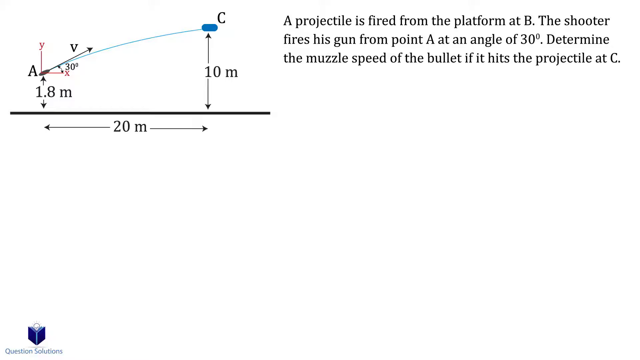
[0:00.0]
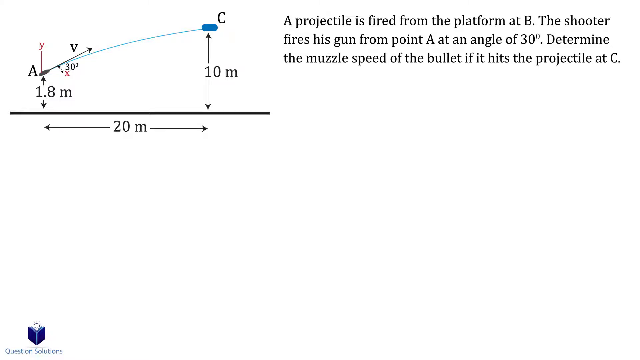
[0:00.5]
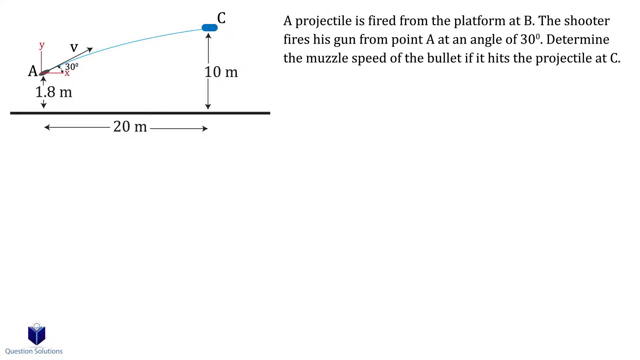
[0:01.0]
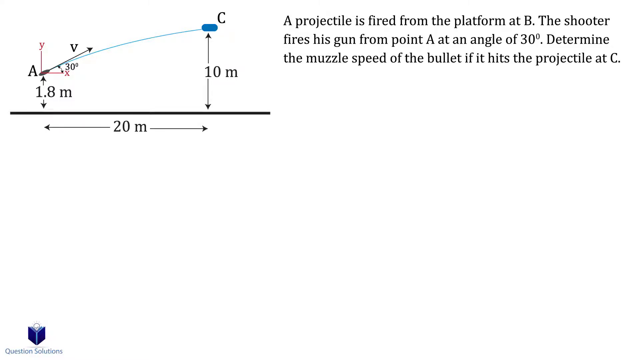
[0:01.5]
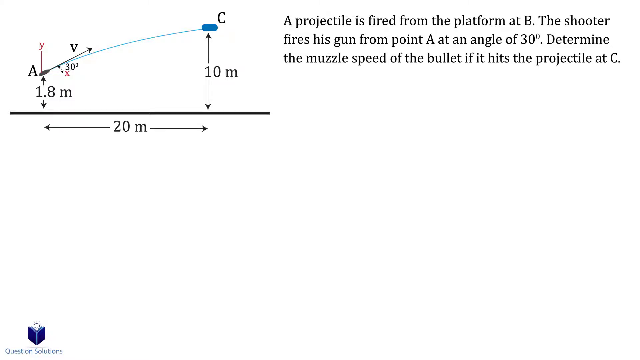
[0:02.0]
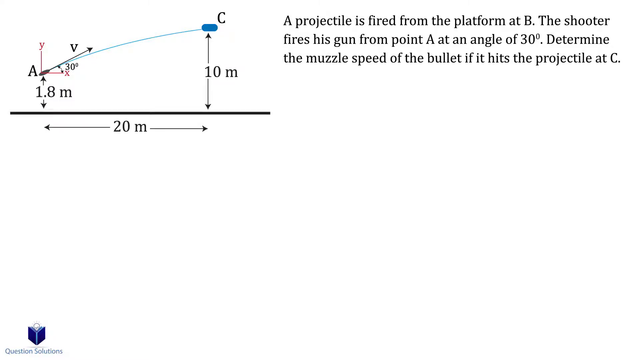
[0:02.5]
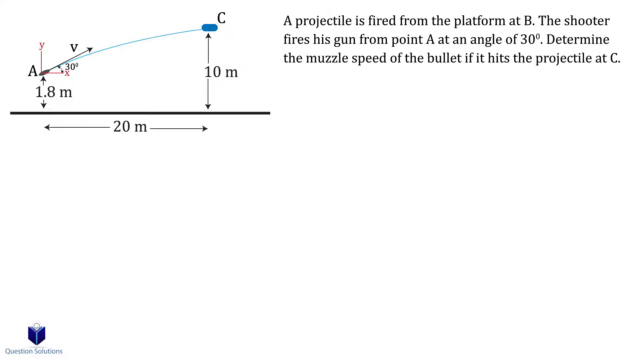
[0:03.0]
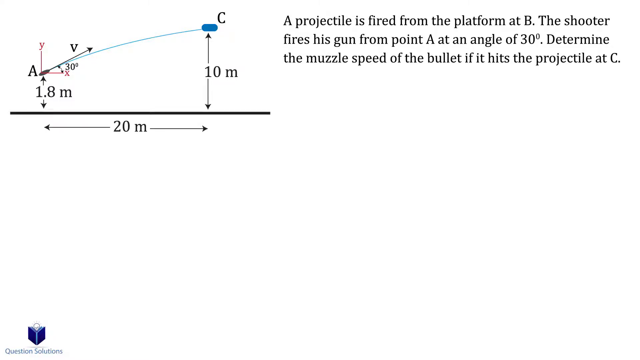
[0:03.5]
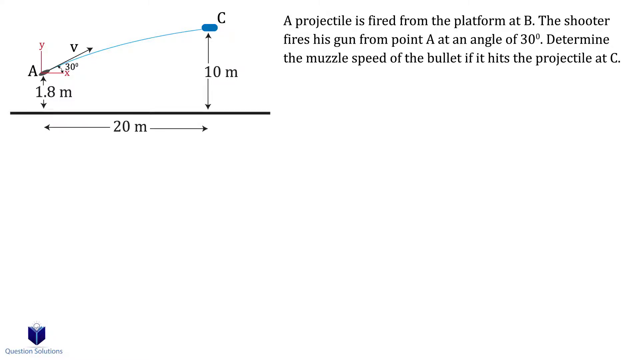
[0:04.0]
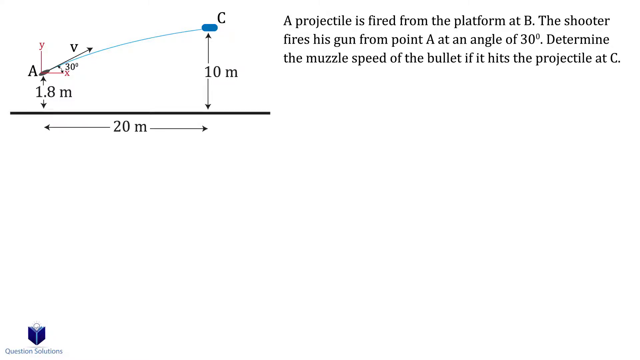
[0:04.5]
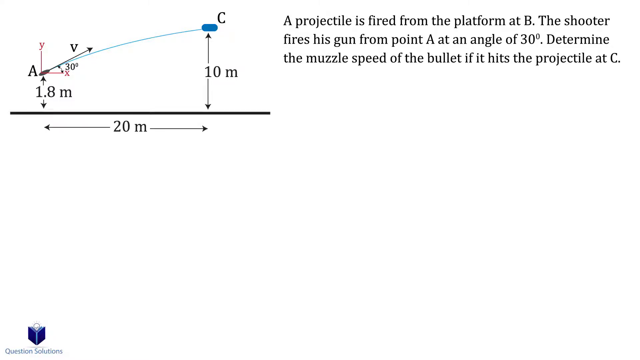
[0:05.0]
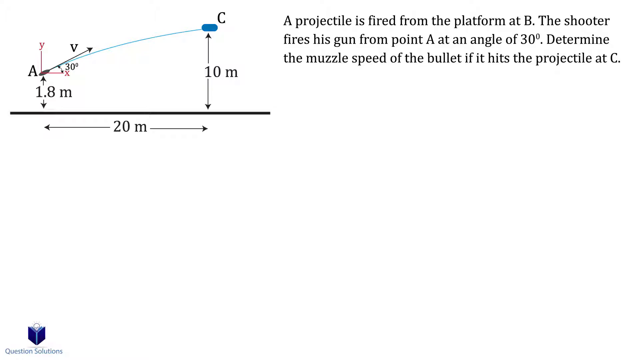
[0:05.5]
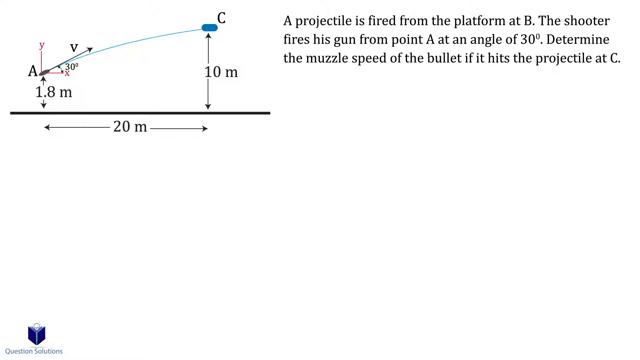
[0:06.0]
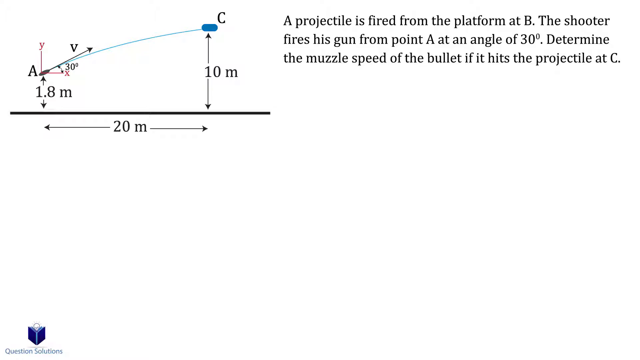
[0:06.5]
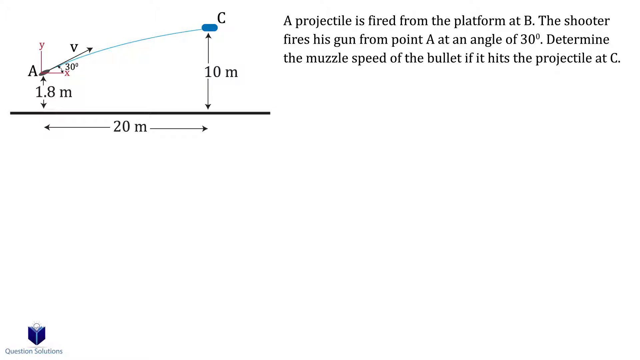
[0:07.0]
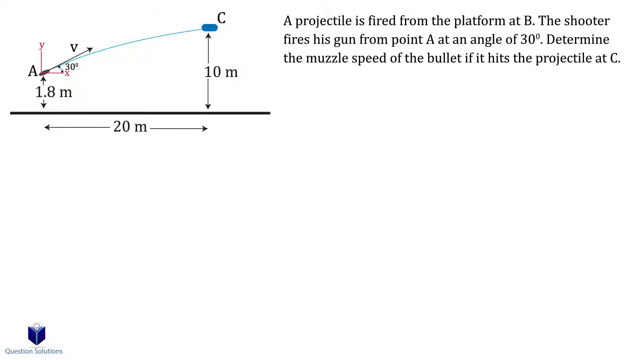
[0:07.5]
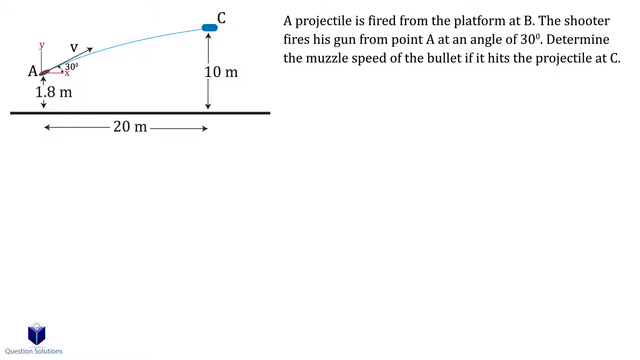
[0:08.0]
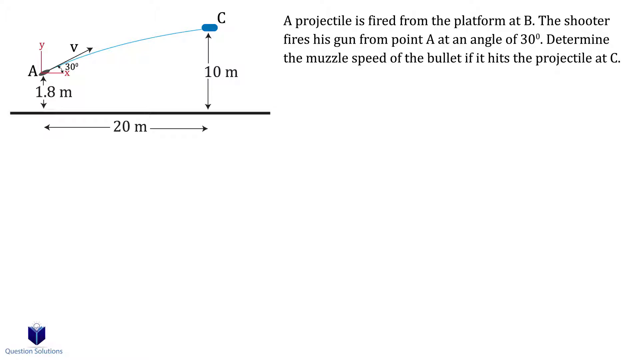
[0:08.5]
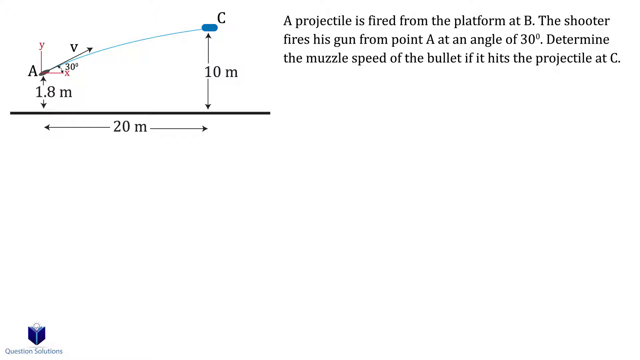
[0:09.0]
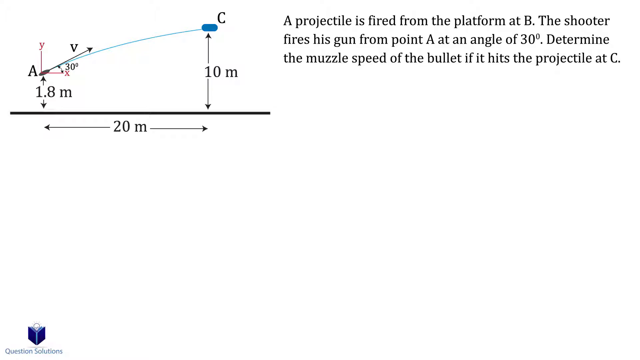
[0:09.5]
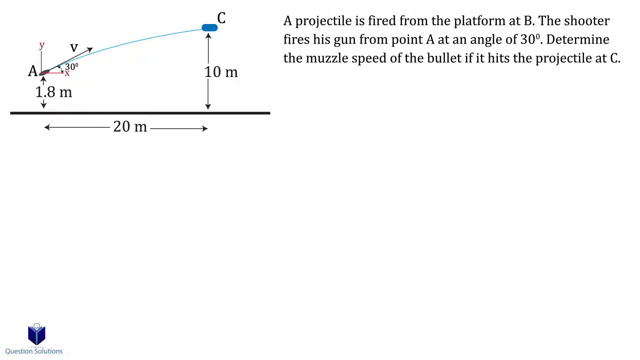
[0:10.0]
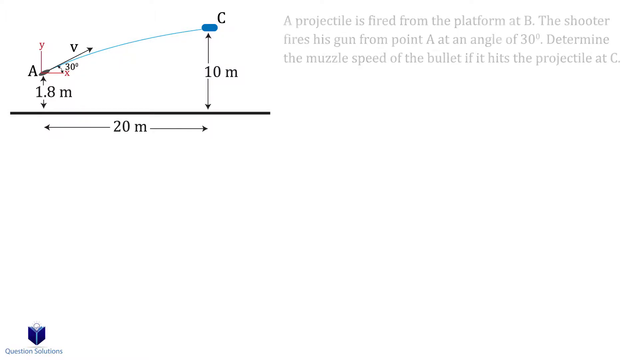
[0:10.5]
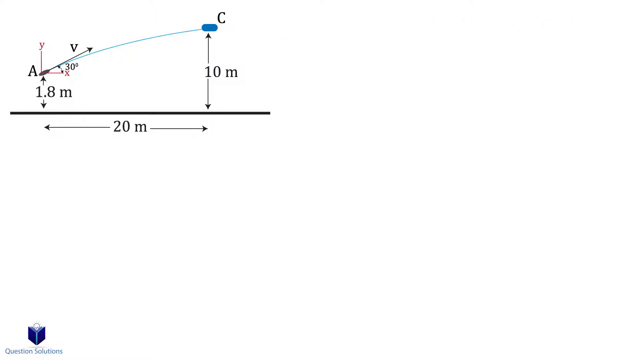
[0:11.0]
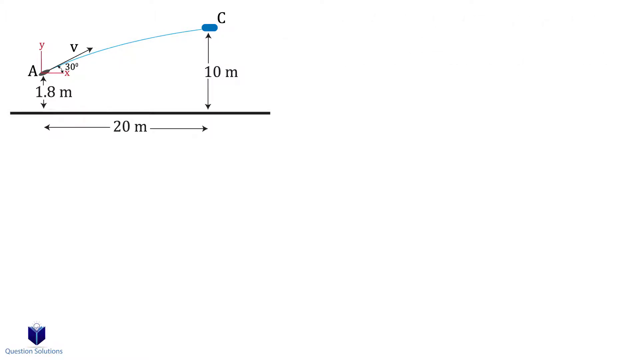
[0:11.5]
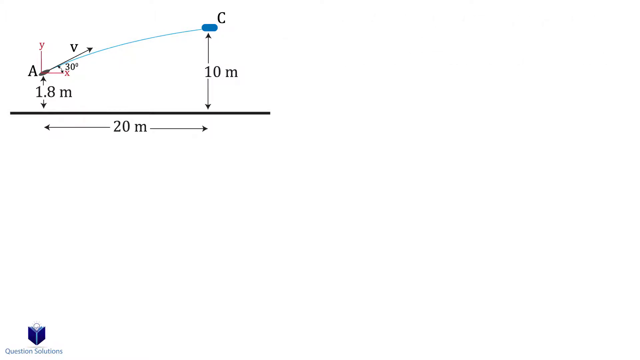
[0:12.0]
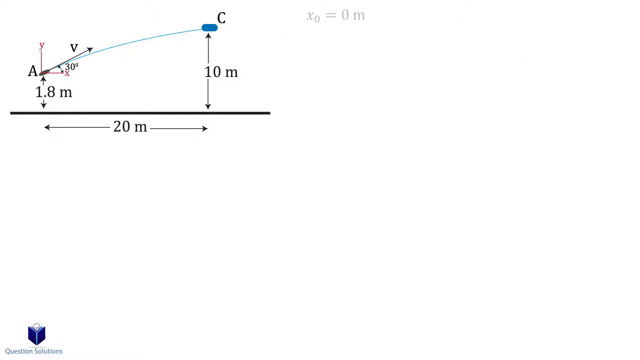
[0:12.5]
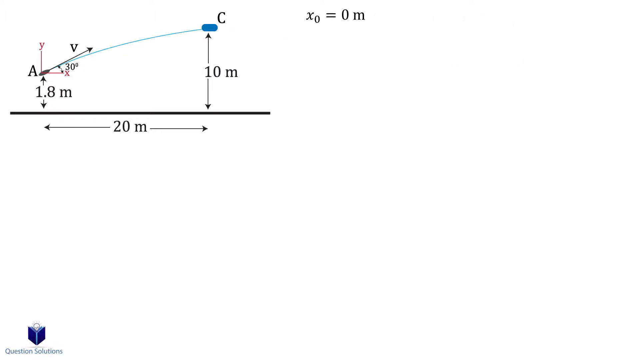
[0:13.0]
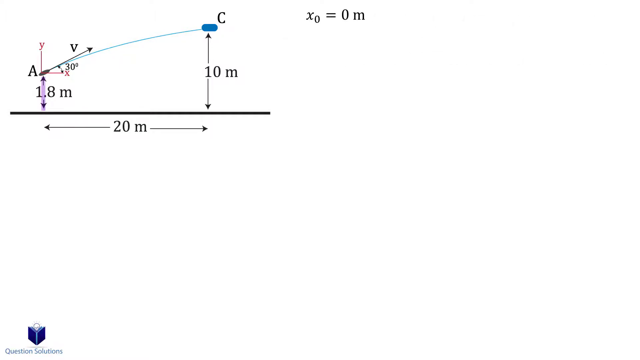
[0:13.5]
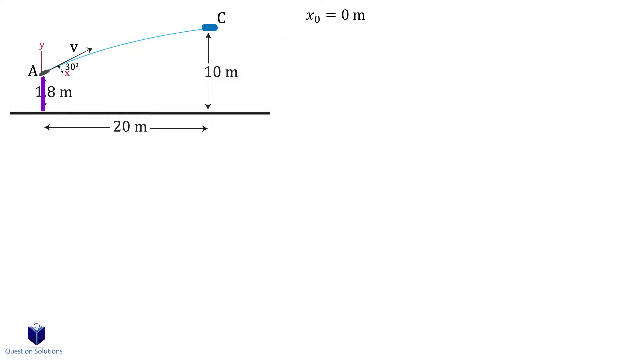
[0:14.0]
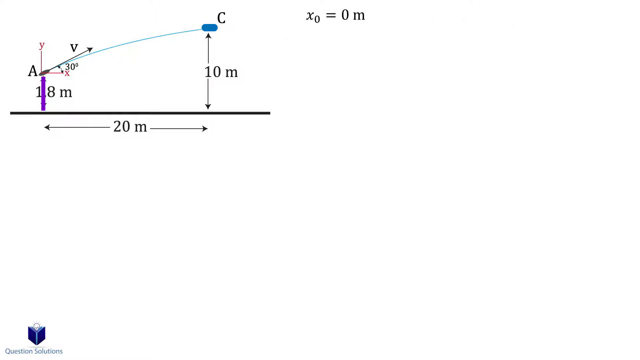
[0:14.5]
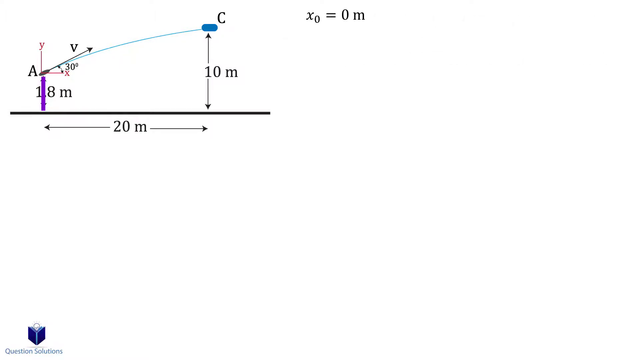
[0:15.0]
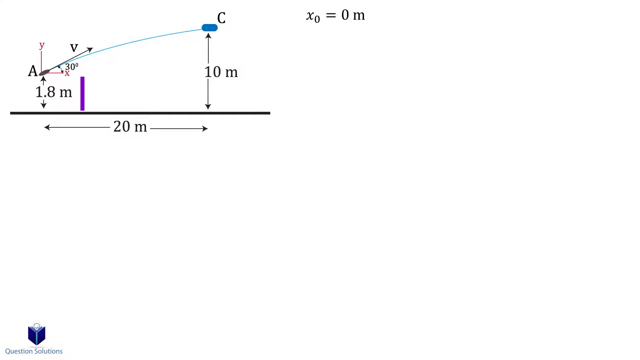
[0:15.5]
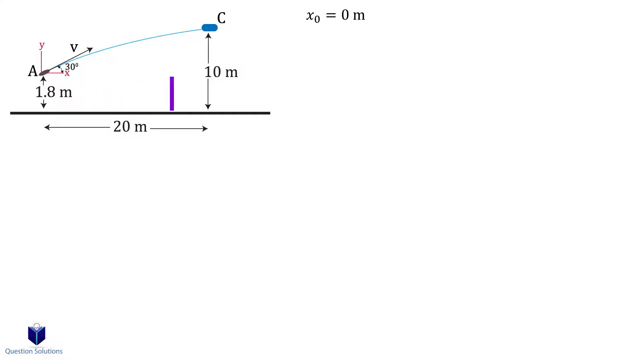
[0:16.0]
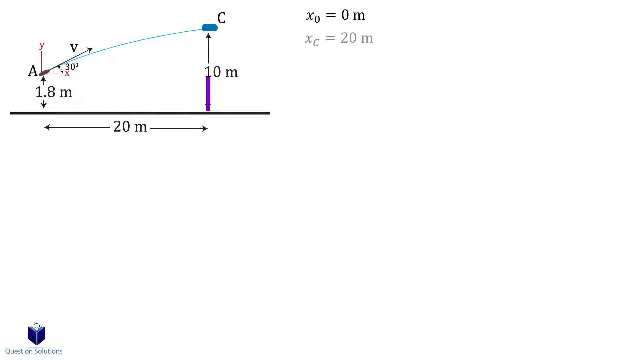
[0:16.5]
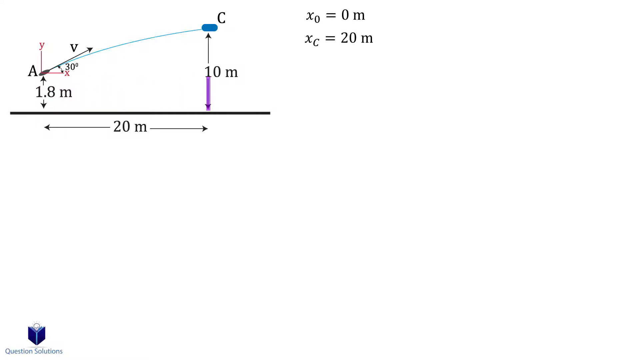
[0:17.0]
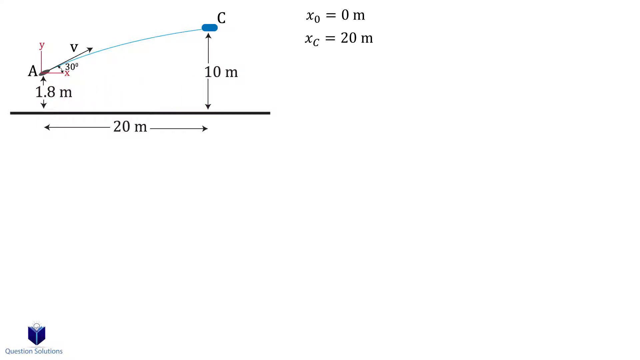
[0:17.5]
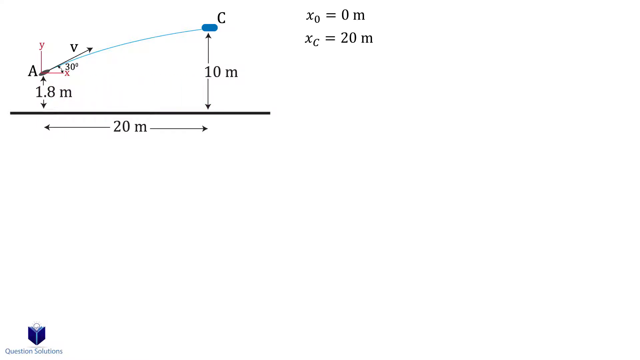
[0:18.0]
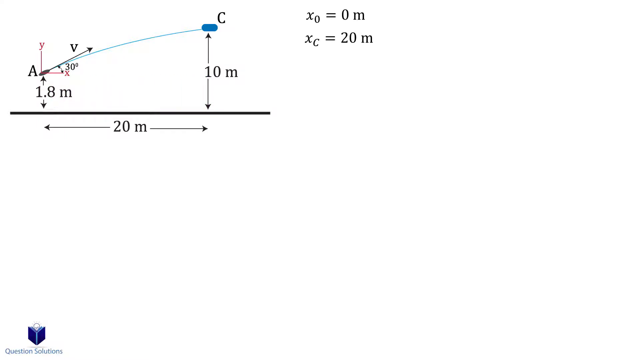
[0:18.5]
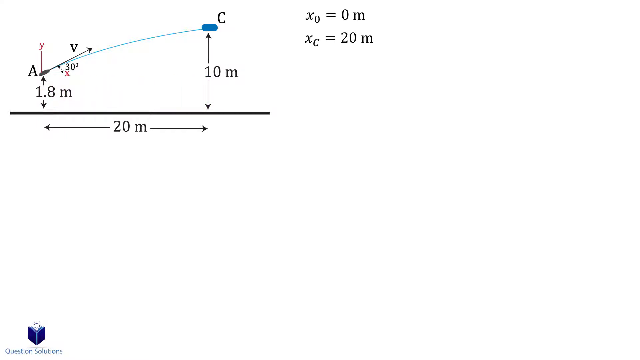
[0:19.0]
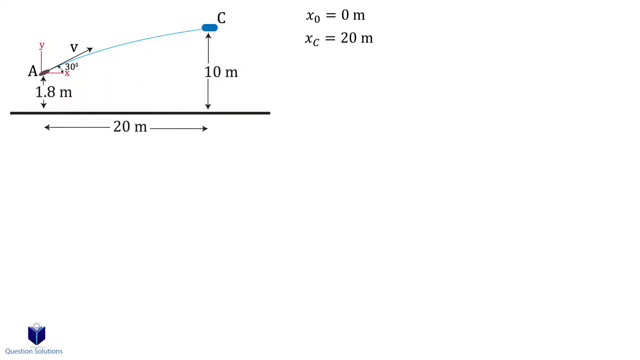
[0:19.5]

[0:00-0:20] A white screen has a graph in the top left corner, and on that graph there is a complex math problem. On the right side is a paragraph of small black text that reads: "A projectile is fired from the platform at B. The shooter fires his gun from point A at an angle of 30 degrees. Determine the muzzle speed of the bullet if it hits the projectile at C." The bottom of the screen is completely blank. Then a small equation appears reading "x0 equals 0m," followed by a new equation reading "xc equals 20m." Meanwhile, a vertical purple line appears on the graph and moves from the left side of the screen to about the middle left before disappearing.